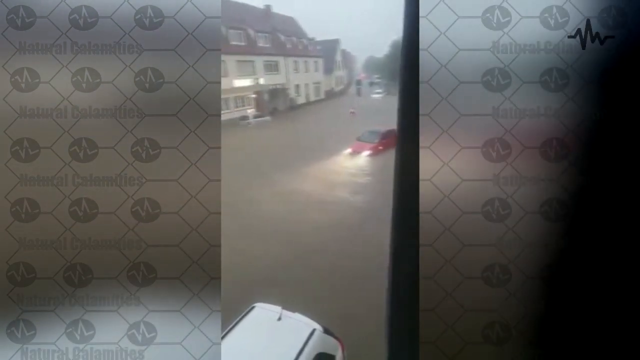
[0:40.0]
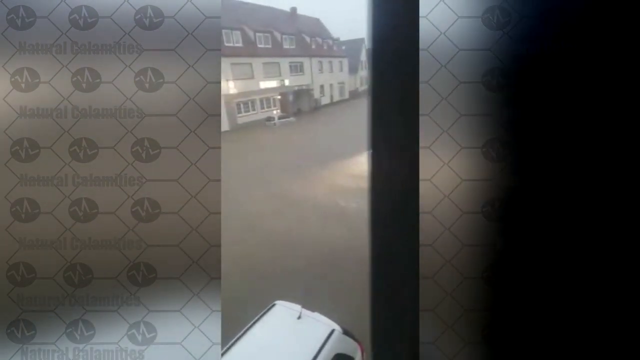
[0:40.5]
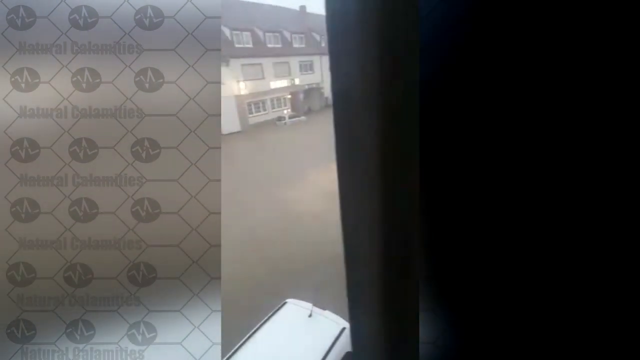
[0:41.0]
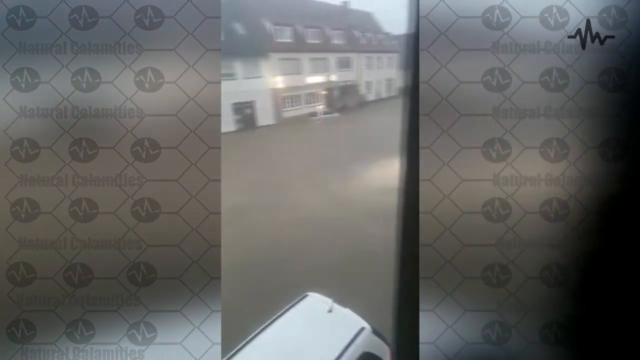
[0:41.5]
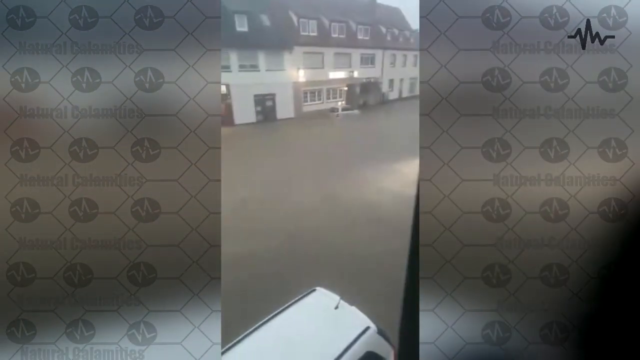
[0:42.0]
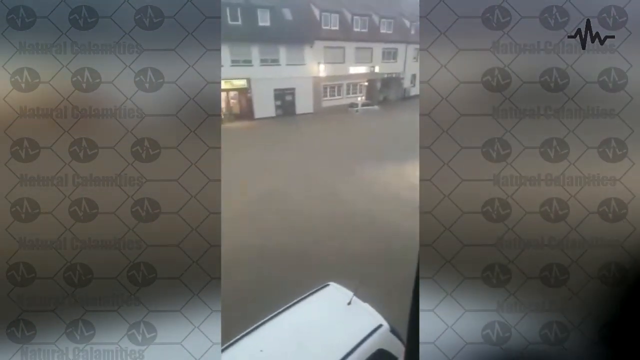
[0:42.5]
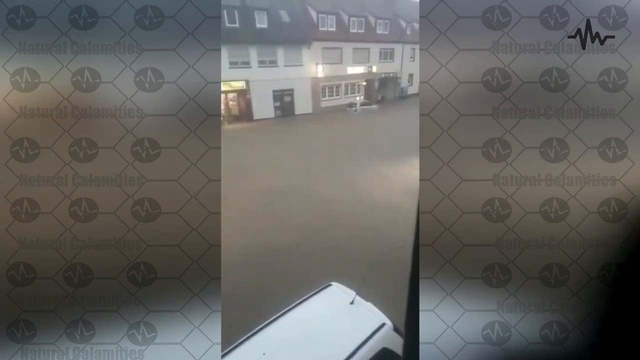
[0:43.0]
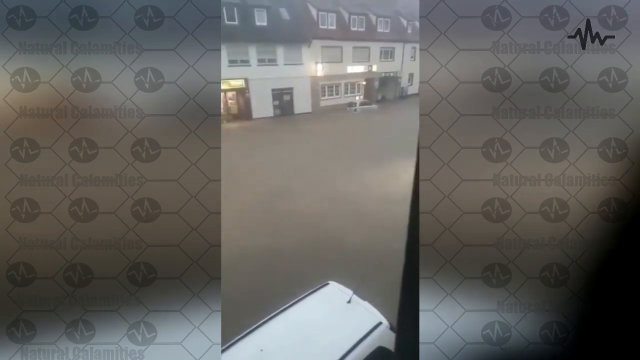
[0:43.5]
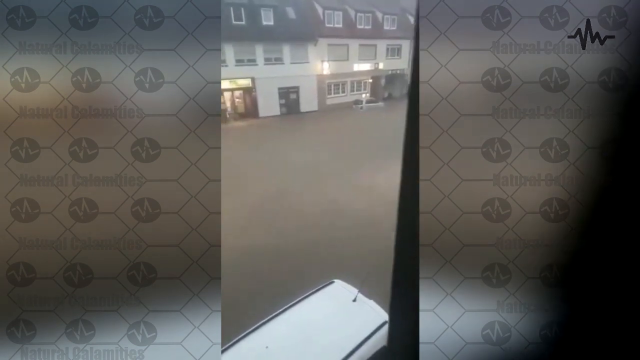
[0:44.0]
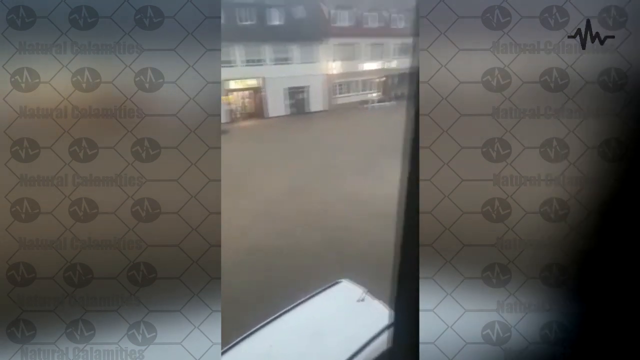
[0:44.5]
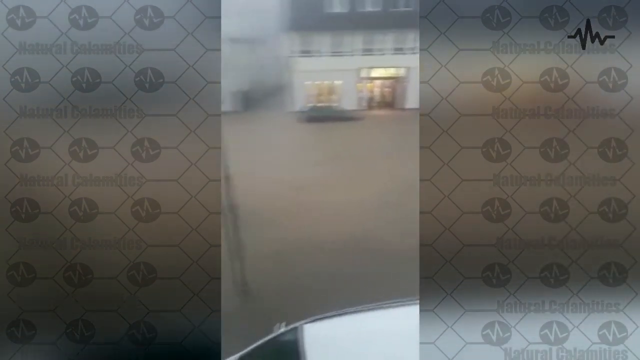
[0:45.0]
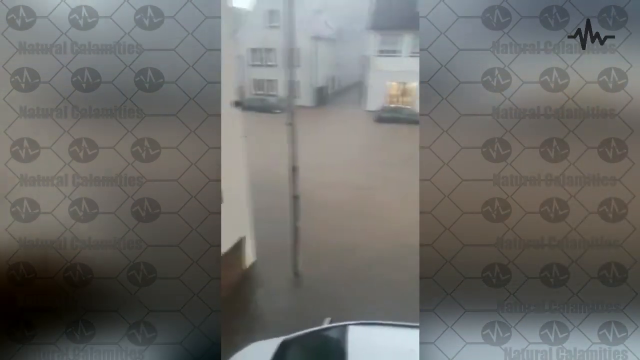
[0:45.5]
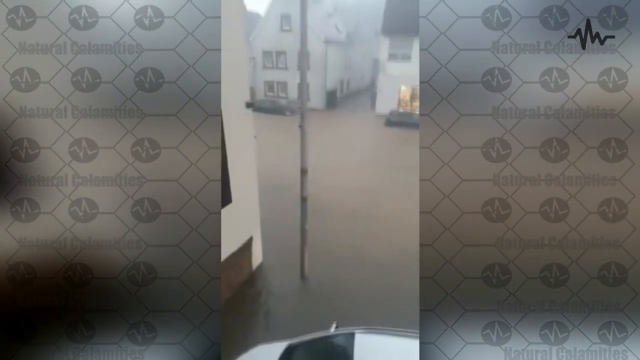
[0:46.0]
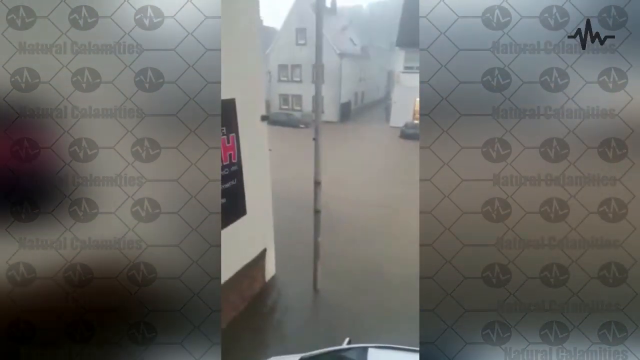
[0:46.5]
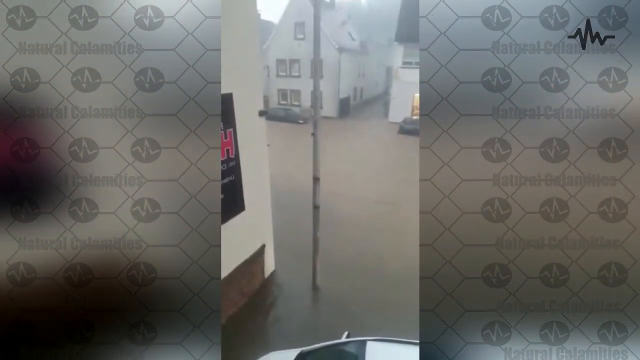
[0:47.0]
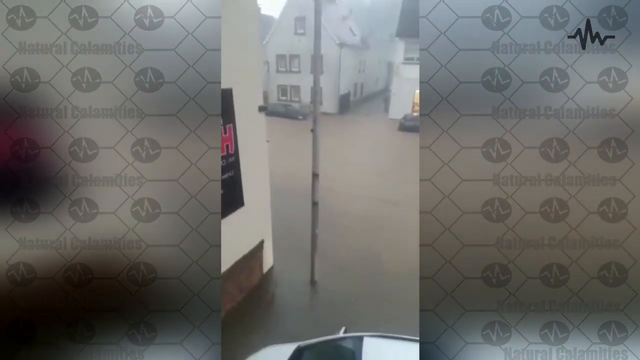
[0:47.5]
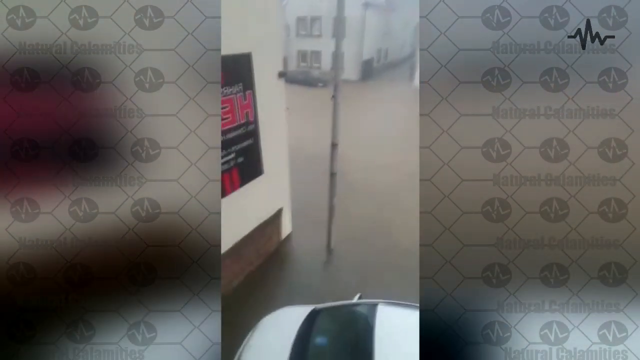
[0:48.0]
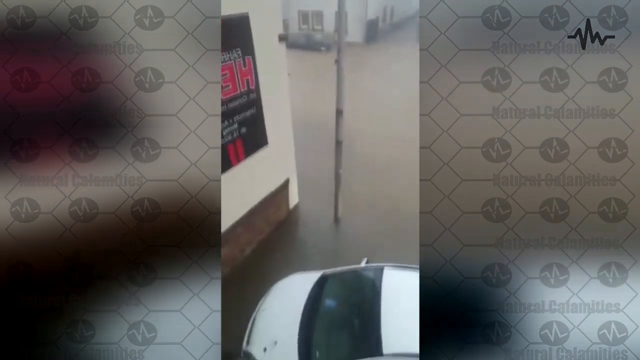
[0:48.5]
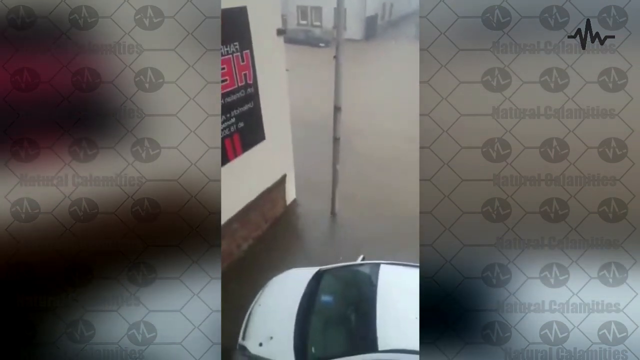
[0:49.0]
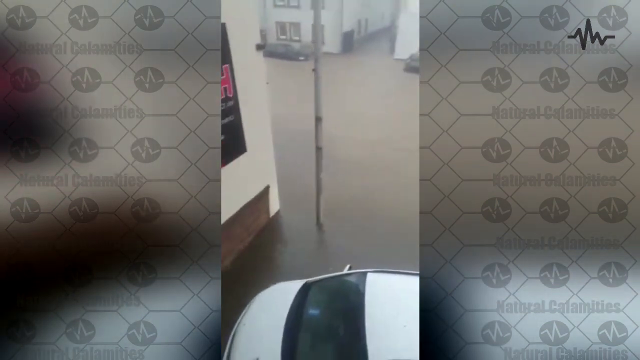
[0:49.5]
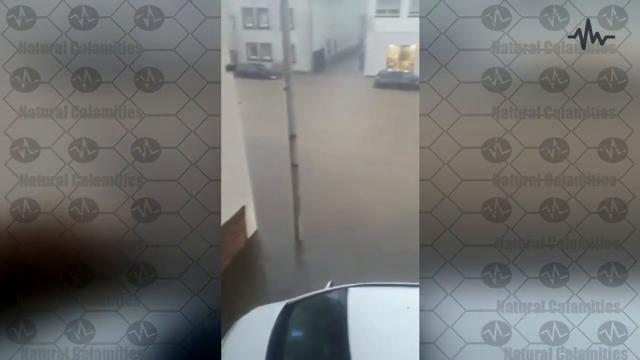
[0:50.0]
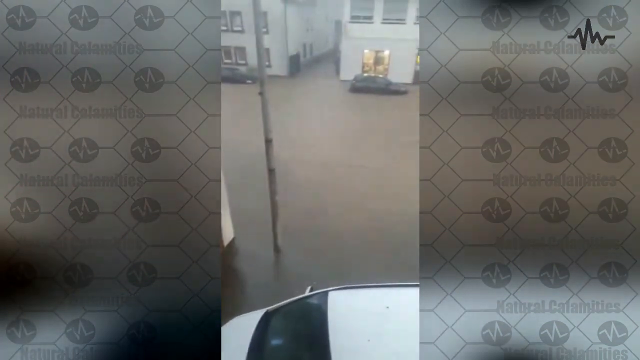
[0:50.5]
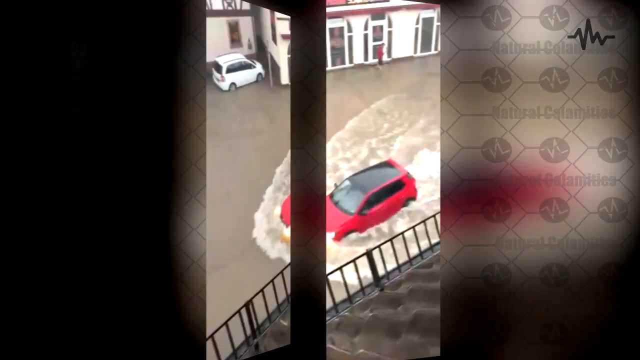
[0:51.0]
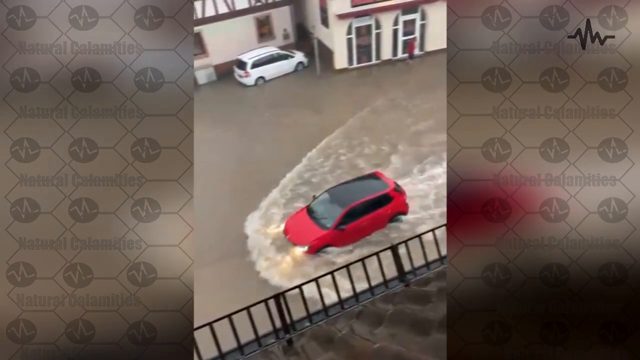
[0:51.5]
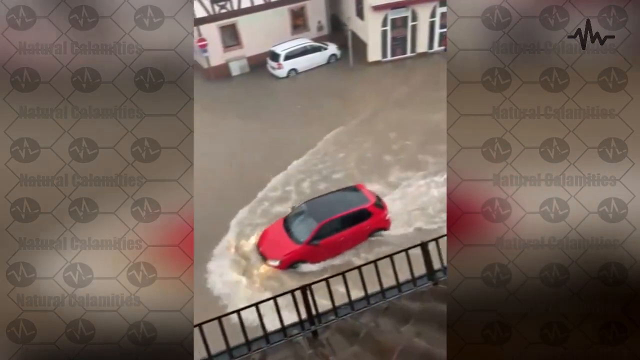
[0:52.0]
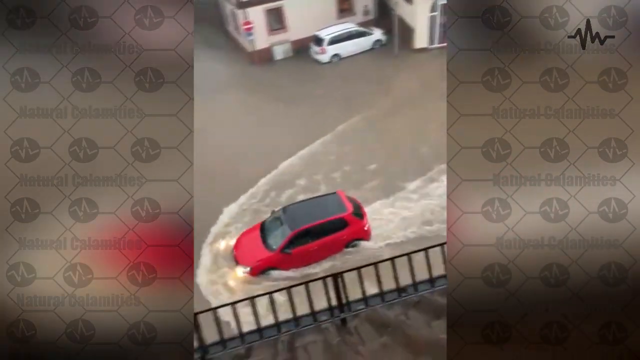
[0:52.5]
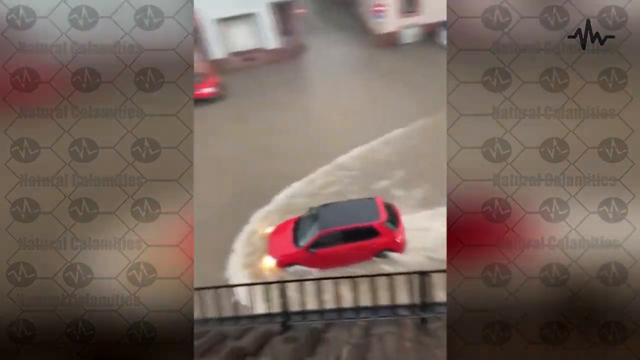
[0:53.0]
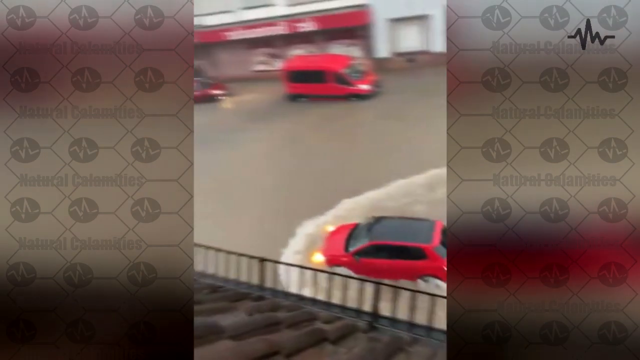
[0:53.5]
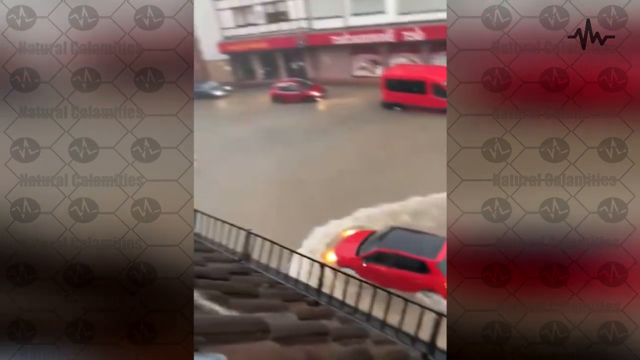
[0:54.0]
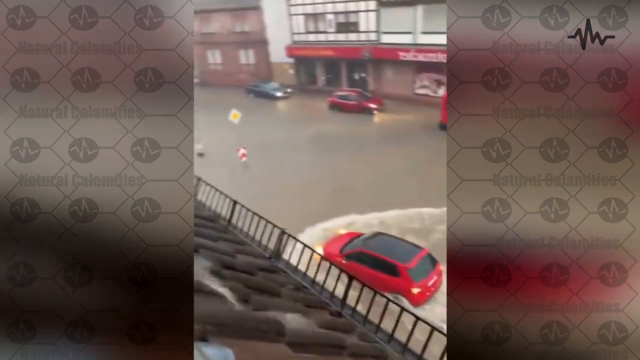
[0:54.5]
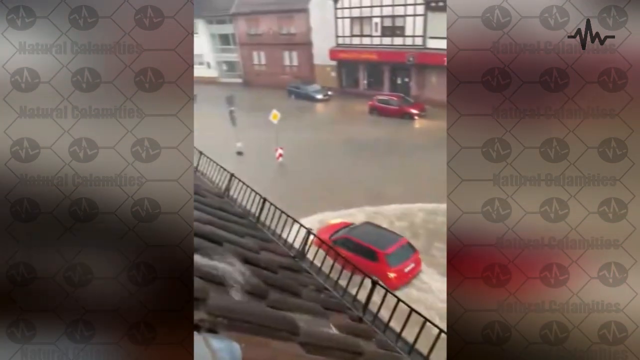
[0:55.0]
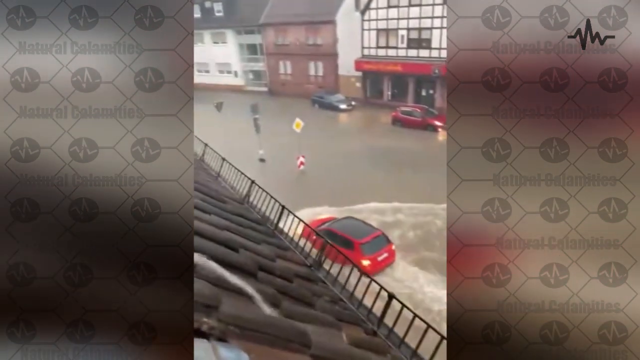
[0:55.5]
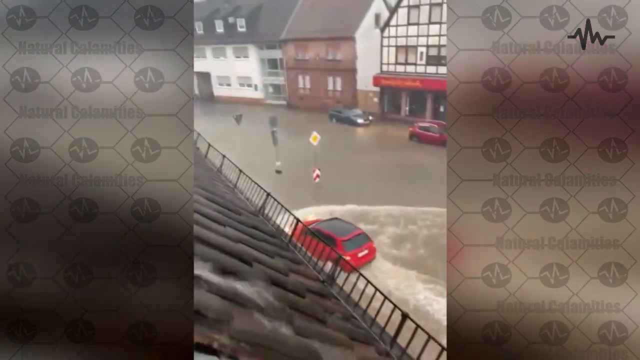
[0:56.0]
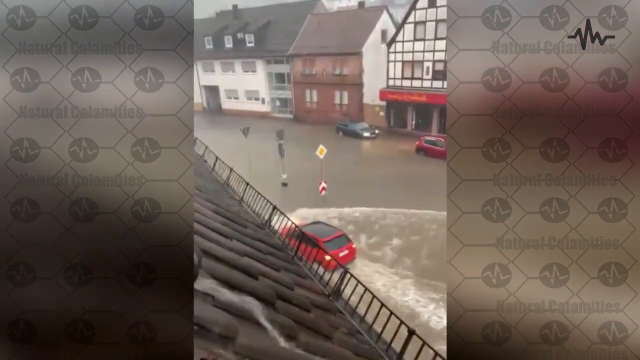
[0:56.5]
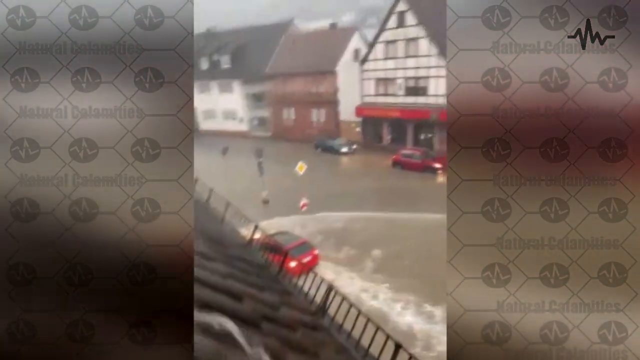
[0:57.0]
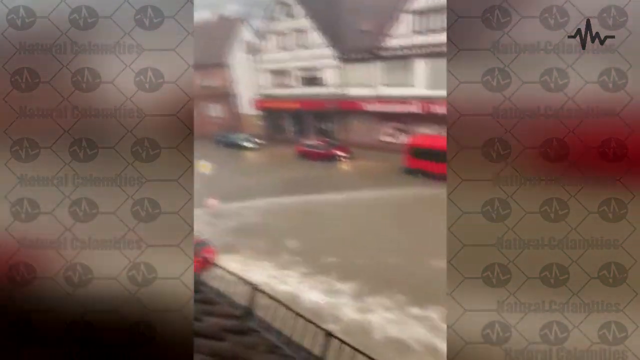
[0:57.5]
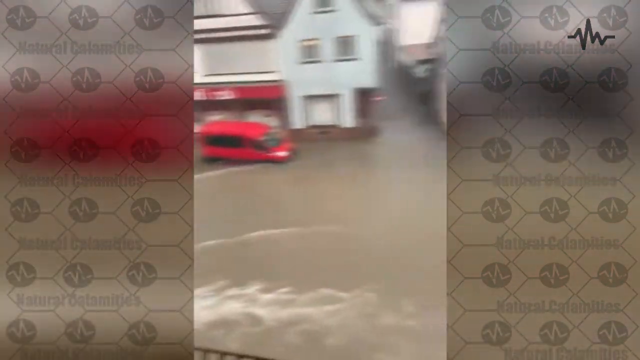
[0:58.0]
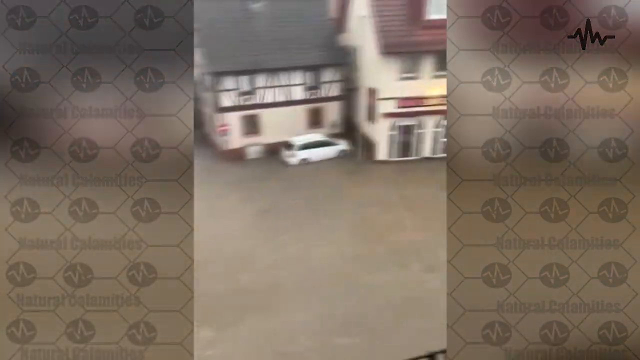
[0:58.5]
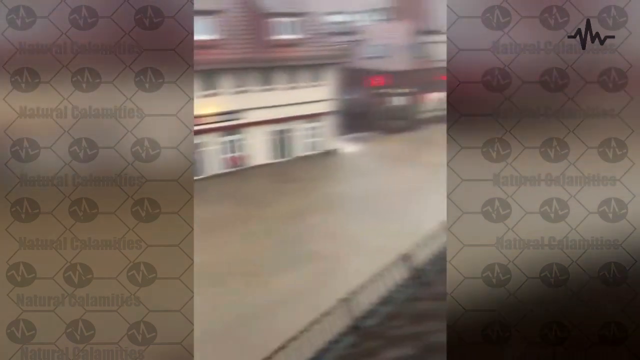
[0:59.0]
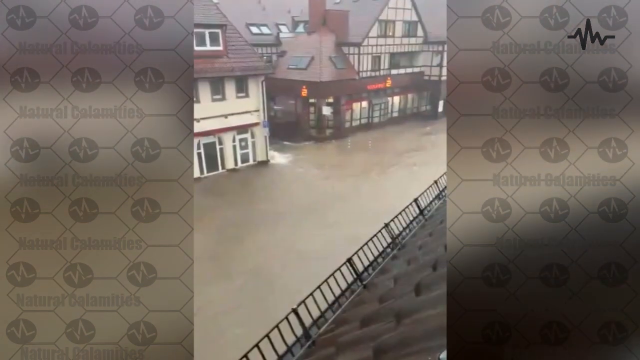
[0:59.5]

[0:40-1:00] A red car pushes through the water toward the other side, where most of the buildings are half submerged by the flood. The water is dirty rather than clean, full of rubble collected as it flowed. Another video follows that does not show much; only trees and buildings can be made out. Then another video, tagged with the date 26 June 2021, shows a very large tide of water, a flood, coming through with great power.